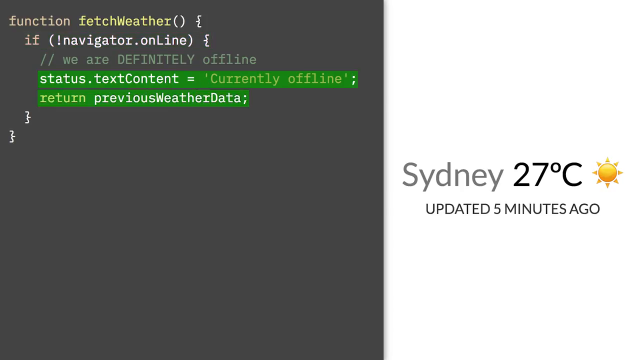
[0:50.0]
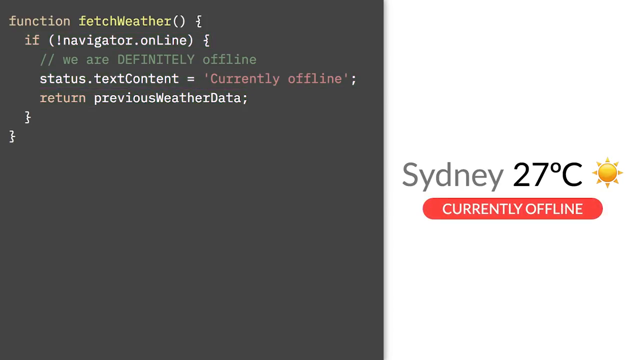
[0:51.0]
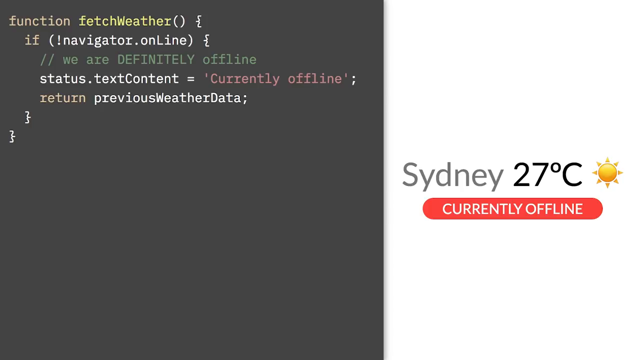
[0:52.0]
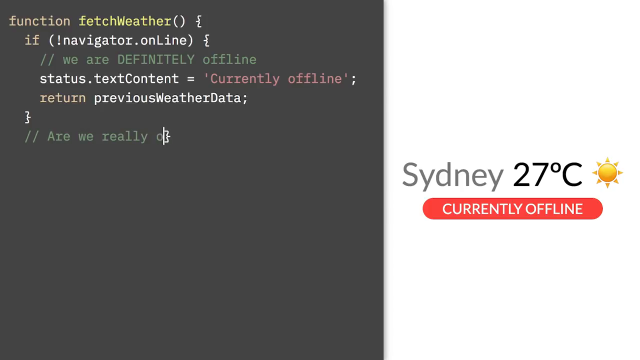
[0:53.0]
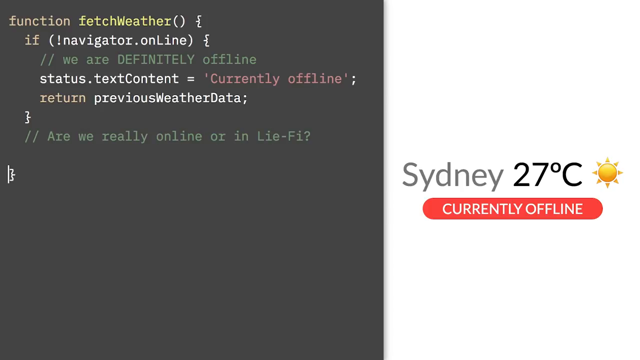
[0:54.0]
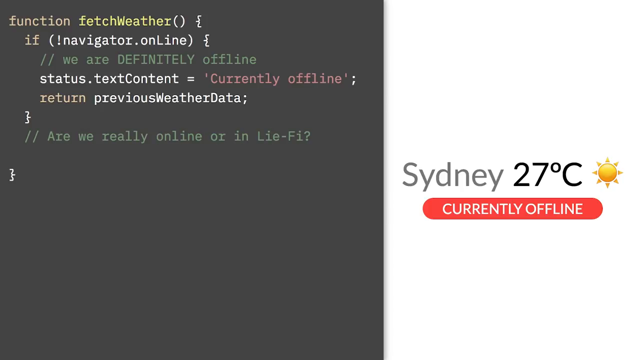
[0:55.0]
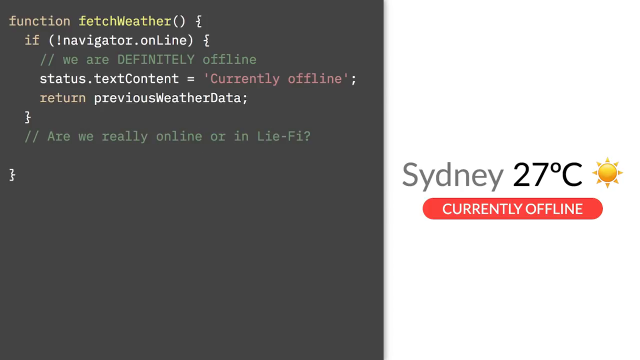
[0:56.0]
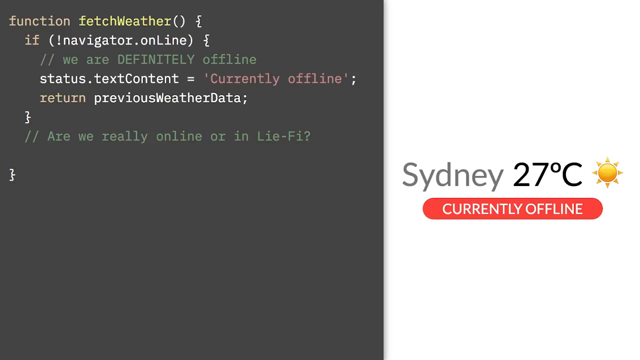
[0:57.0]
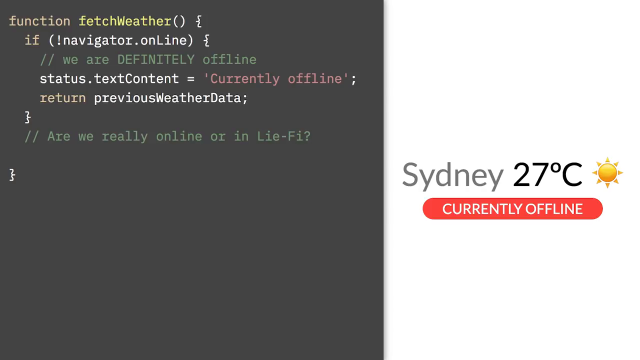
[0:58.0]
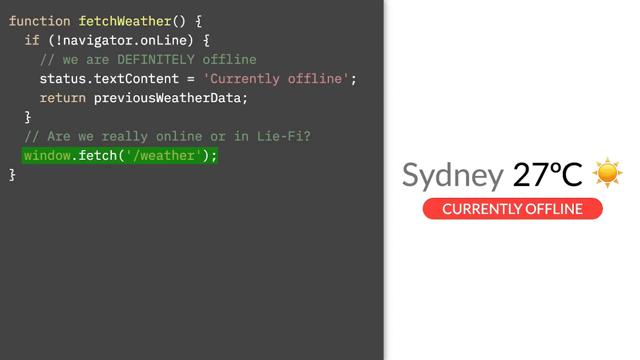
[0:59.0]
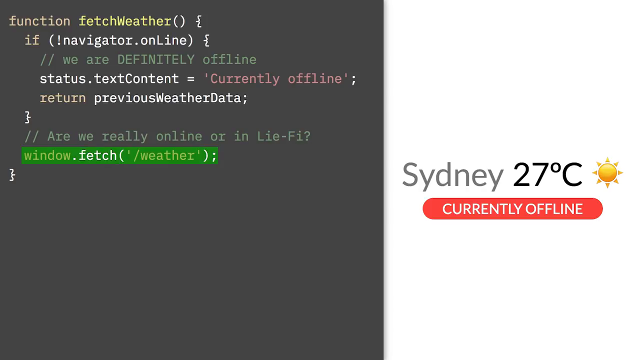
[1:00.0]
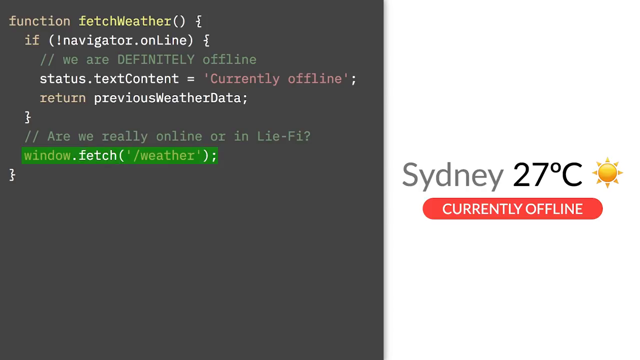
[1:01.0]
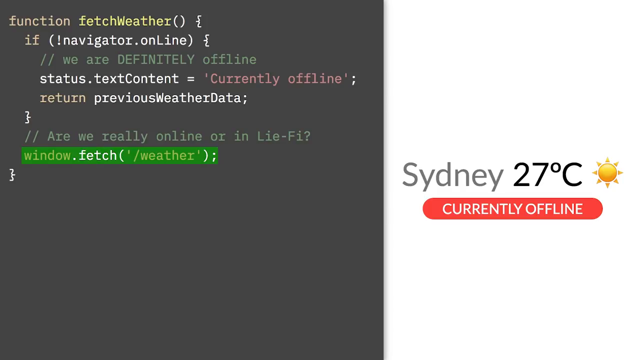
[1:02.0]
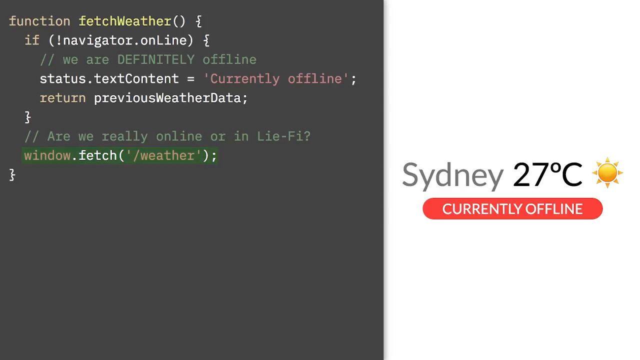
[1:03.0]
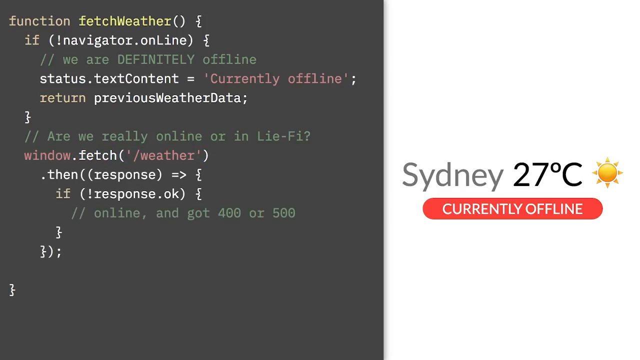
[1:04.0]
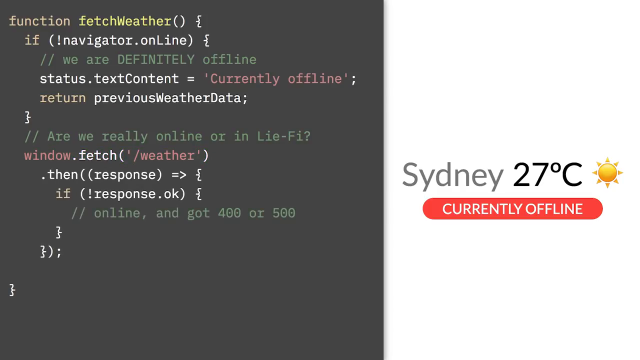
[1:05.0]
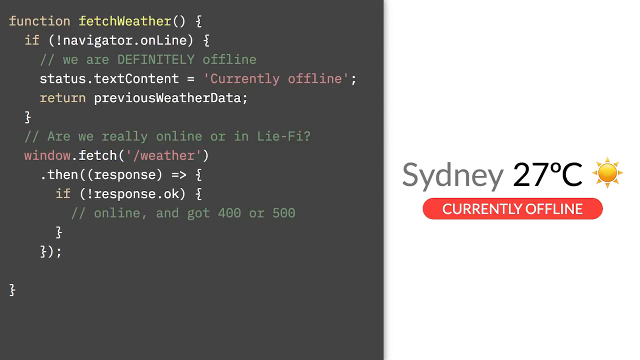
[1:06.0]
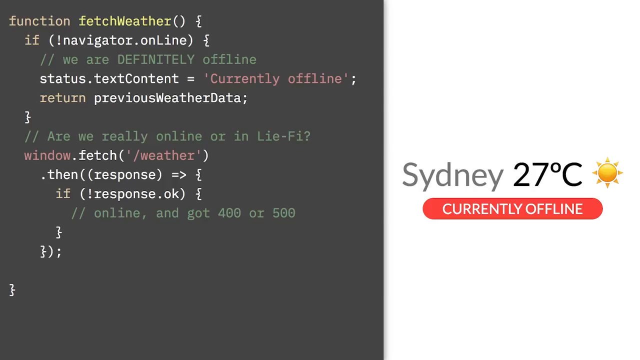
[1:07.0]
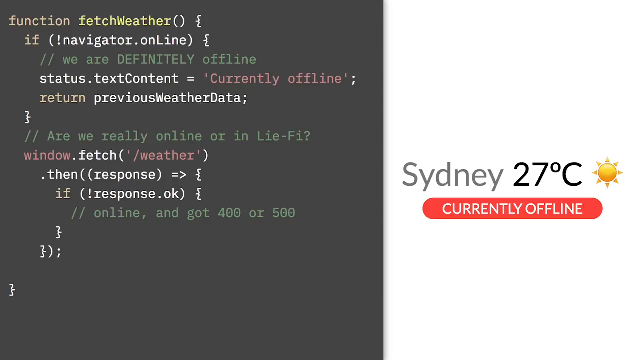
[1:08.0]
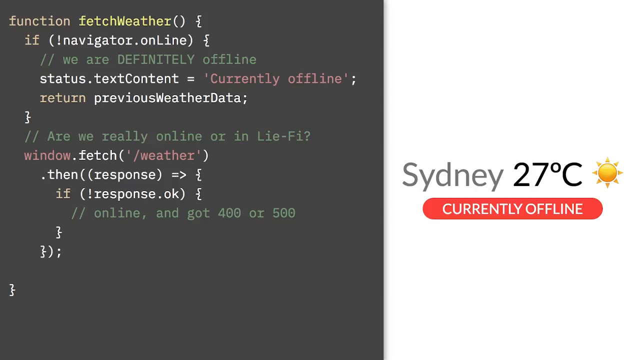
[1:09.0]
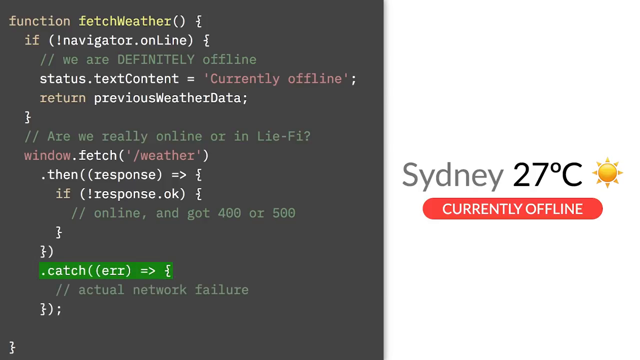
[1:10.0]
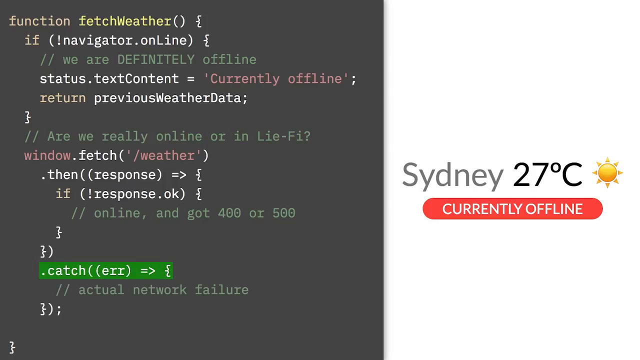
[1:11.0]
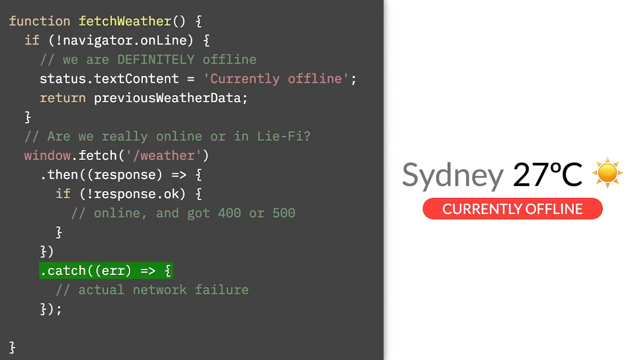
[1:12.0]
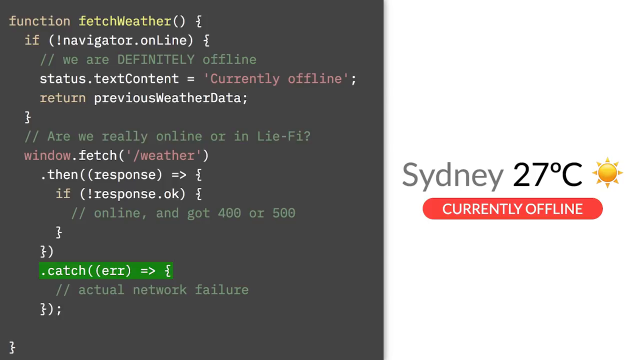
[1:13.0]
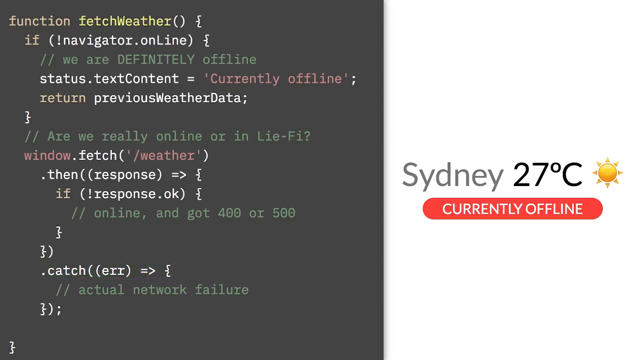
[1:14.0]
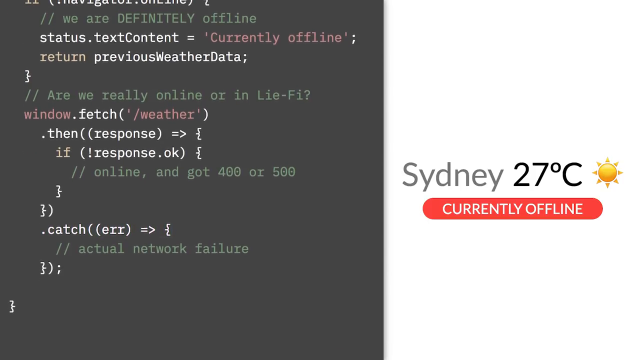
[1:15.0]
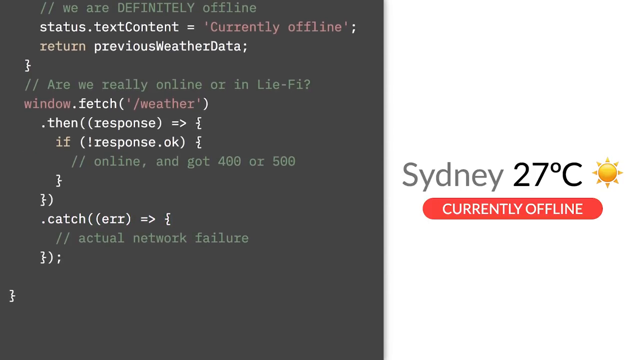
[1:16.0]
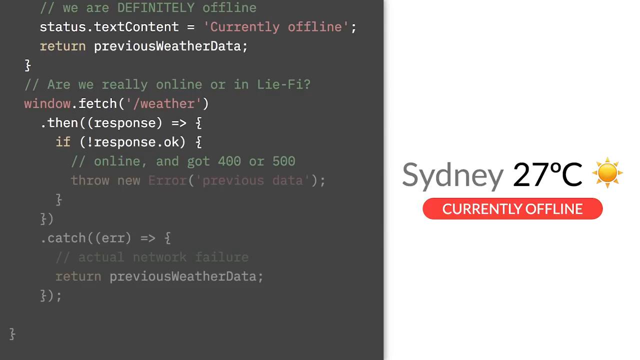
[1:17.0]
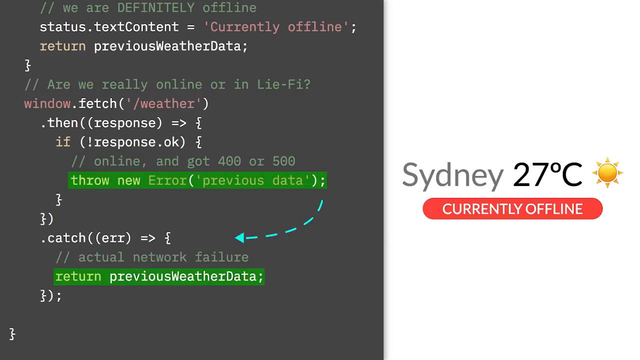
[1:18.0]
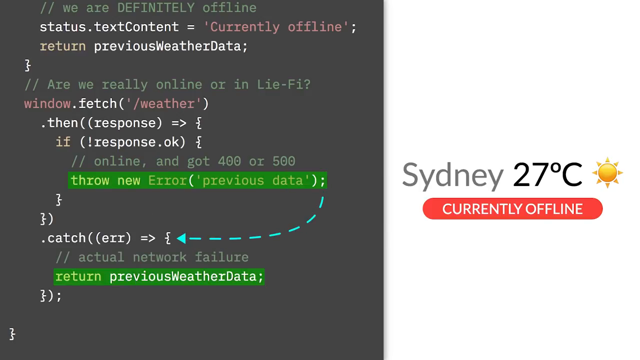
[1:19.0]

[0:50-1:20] The split screen continues. On the right-hand side is still the white screen reading "Sydney 27 degrees Celsius," and below it, white text on a red background says "currently offline." On the left, new text continues to be typed, beginning "are we really online or." Below it is a line reading "window.fetch" with "/weather" in parentheses, highlighted in green, and below that new text says "then response" and "if response, okay," coding terms in an unusual format. The text on the left is in a pinkish purple, what looks like dark green, and white, while "fetch weather" at the very top is yellow. New text says ".catch" with "err" in parentheses highlighted in green, and below it gray text says "actual network failure." The view scrolls down a little and more text appears: two lines of green highlighted text with a dotted light blue arrow pointing to the middle.